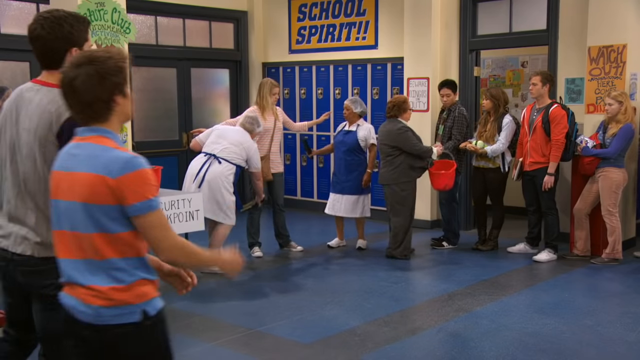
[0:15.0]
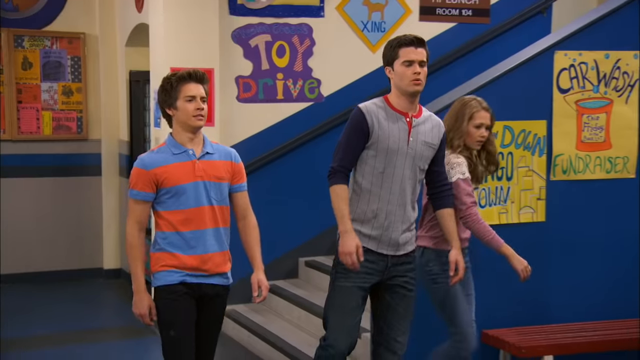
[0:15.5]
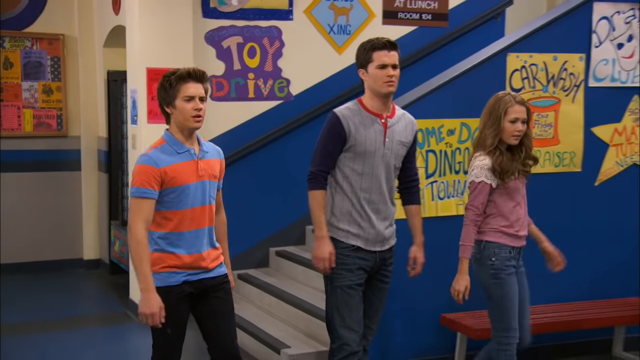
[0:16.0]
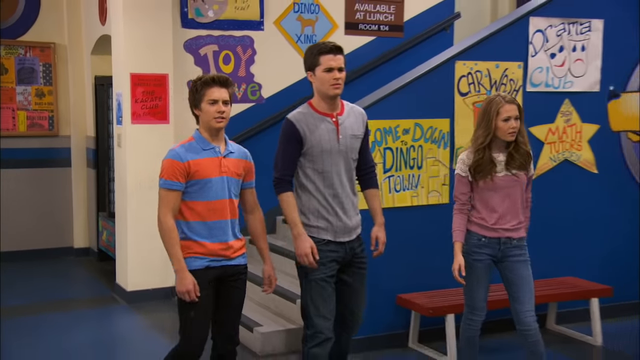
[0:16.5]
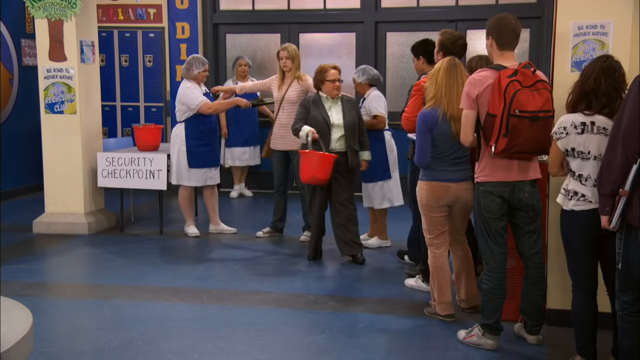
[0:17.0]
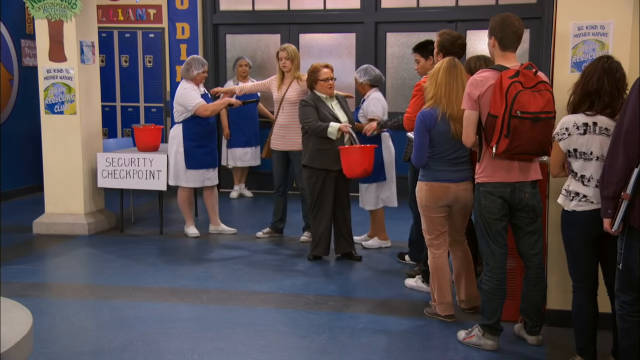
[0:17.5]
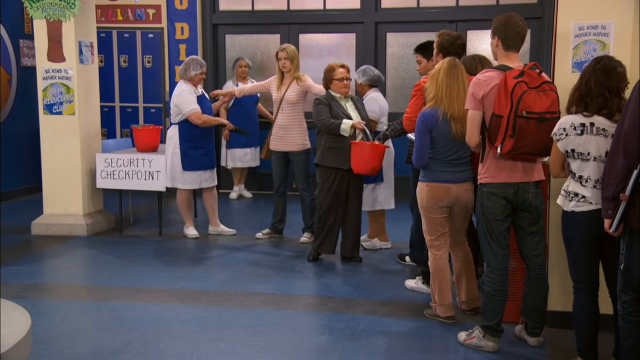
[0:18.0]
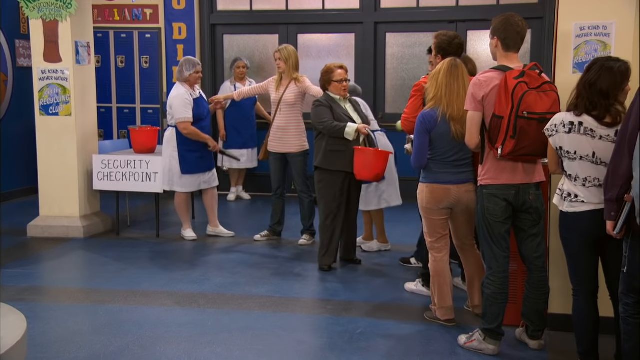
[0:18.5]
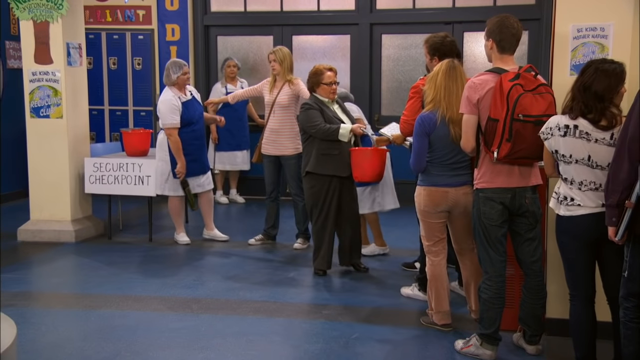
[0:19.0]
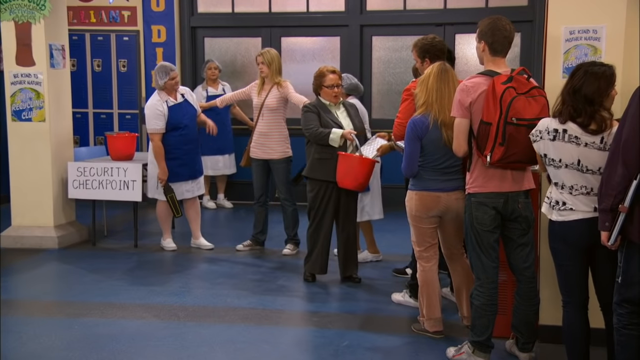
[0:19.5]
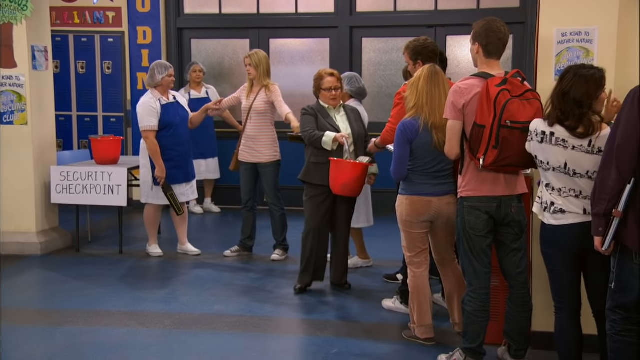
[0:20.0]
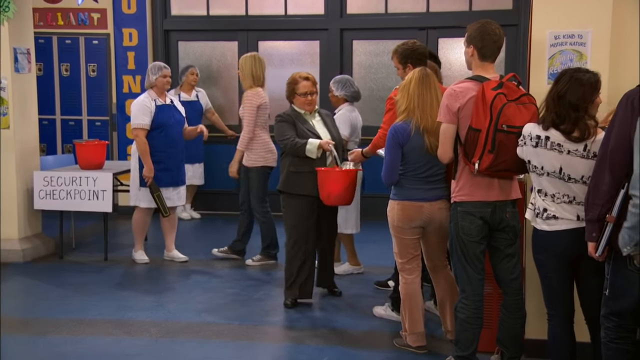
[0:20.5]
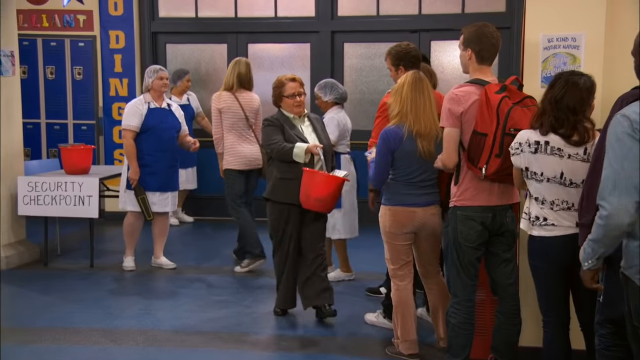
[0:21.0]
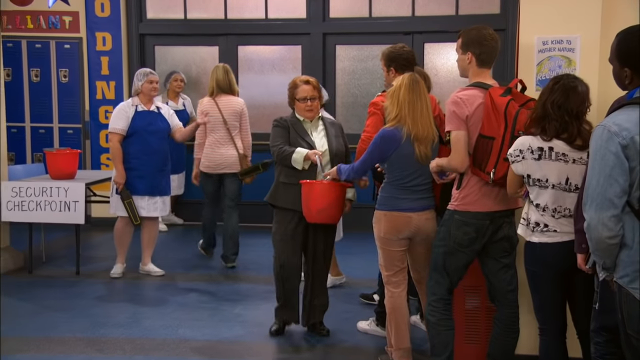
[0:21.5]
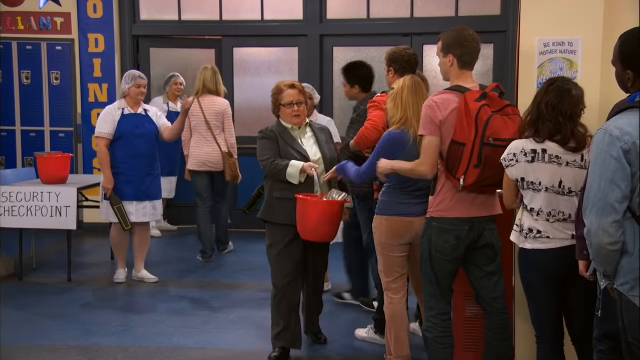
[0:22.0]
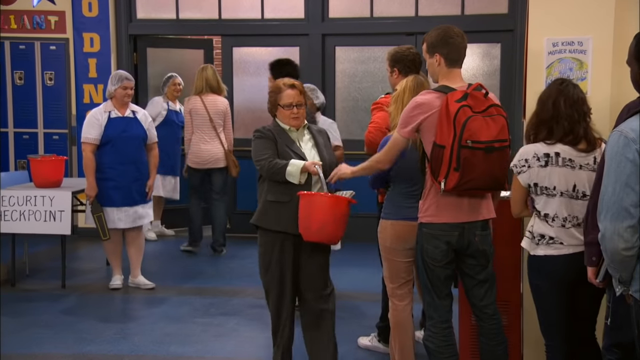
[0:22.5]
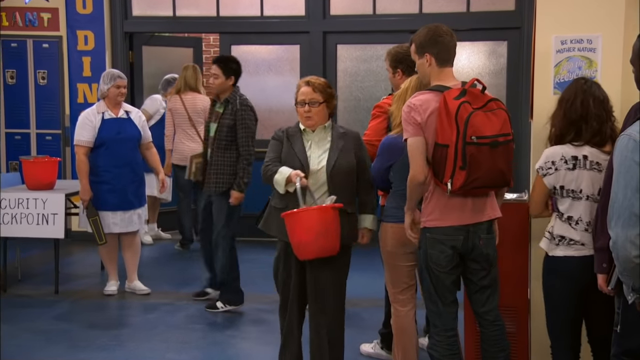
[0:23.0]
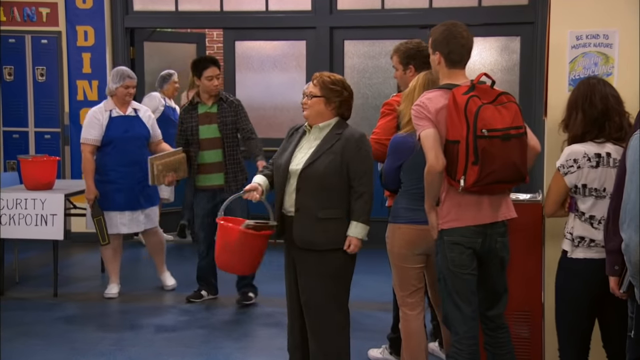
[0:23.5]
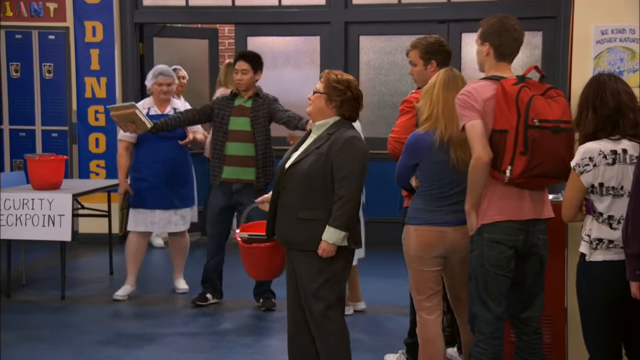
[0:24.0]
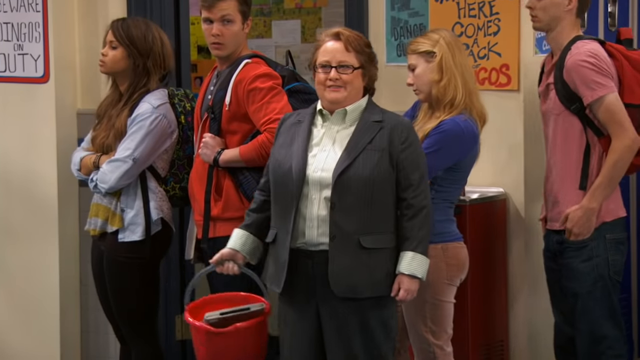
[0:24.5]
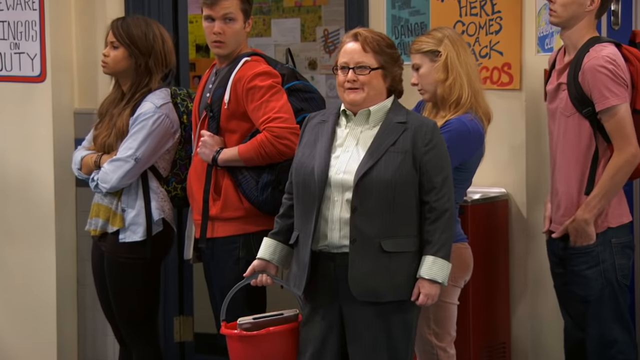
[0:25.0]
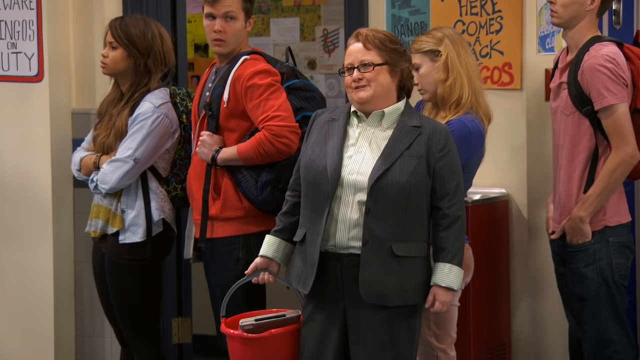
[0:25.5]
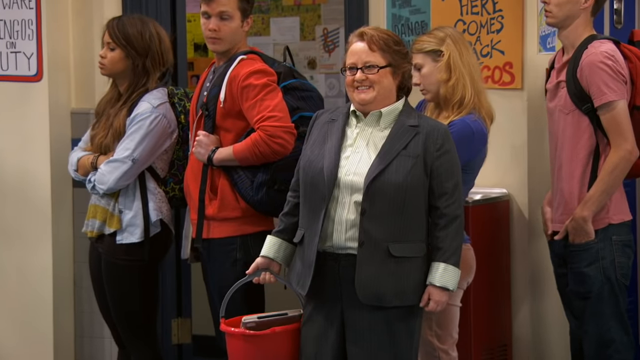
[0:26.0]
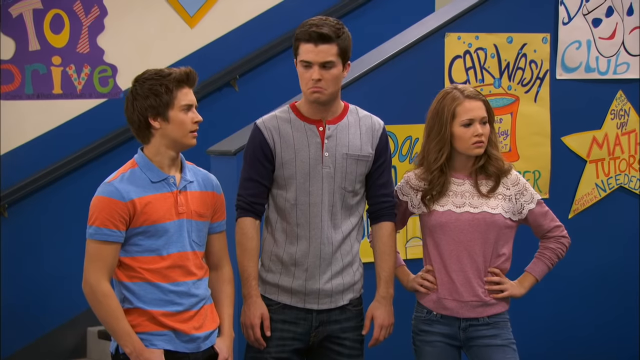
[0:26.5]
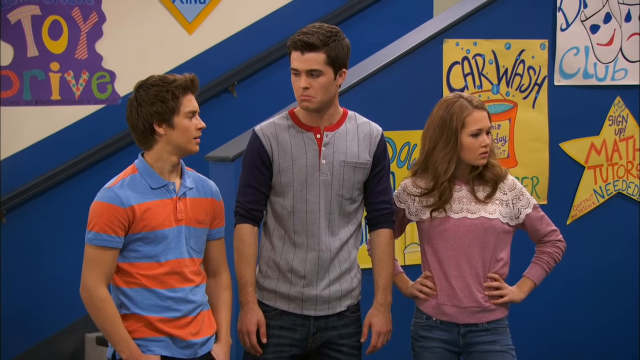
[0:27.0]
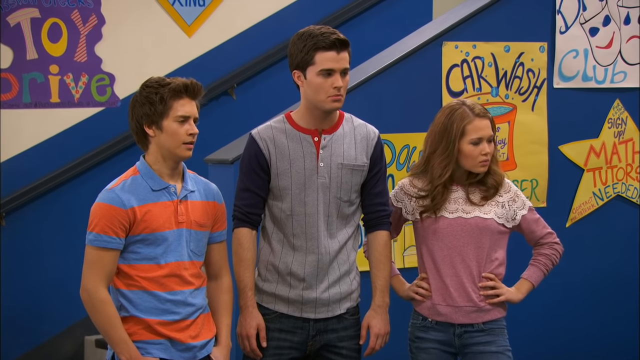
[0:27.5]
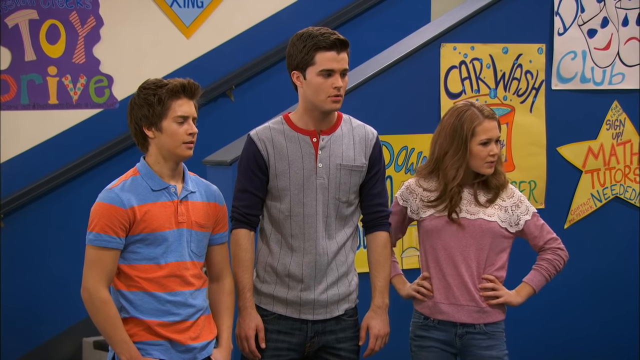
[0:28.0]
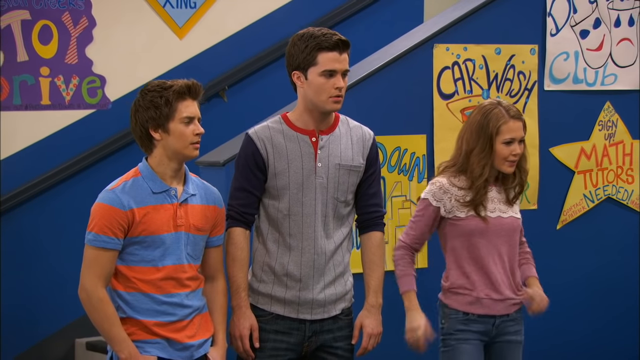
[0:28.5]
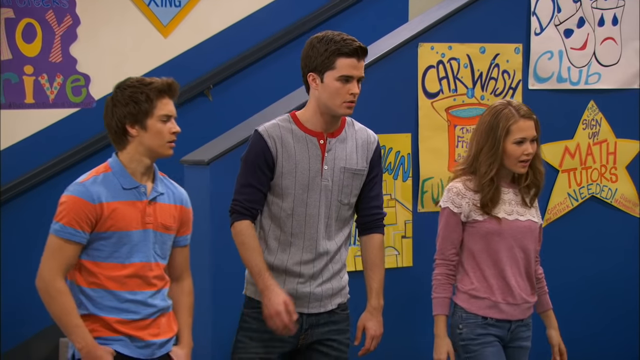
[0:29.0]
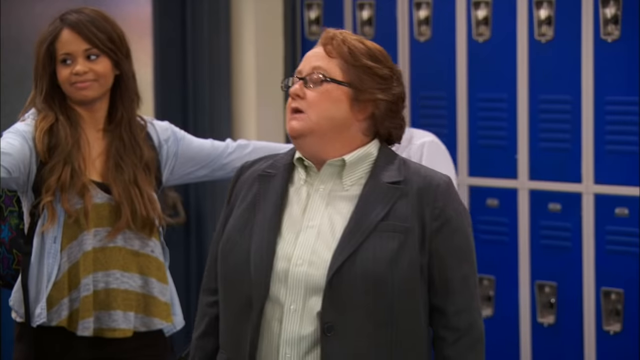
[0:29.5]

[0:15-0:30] As the three younger kids walk toward the other people in the hallway, a line of students and what look like a couple of teachers become visible. The setting is still inside a room, and doors are now visible. On a table is a red bucket that says "security checkpoint." A lady who appears to be a teacher wears black glasses, a dark gray suit and a white long-sleeved shirt underneath it, and carries a red bucket. She walks up a line of students, and the students appear to put something into the bucket as she passes each of them. One student has a red backpack on, and another wears a white and black shirt. Blue lockers are behind the kids. The floor is blue, and there appears to be a vertical blue sign by the doors.